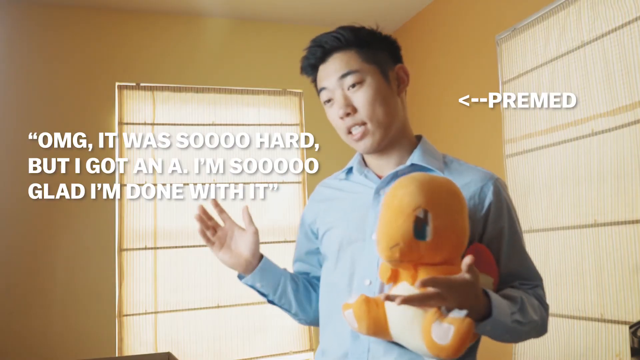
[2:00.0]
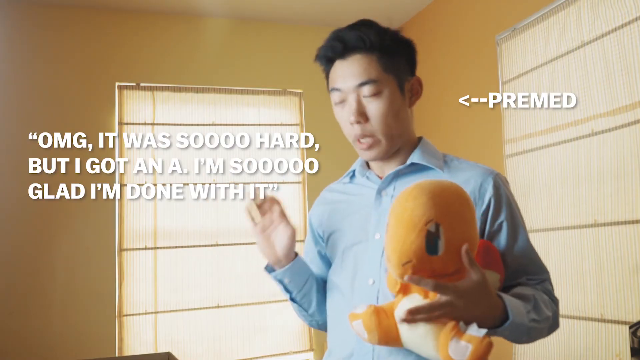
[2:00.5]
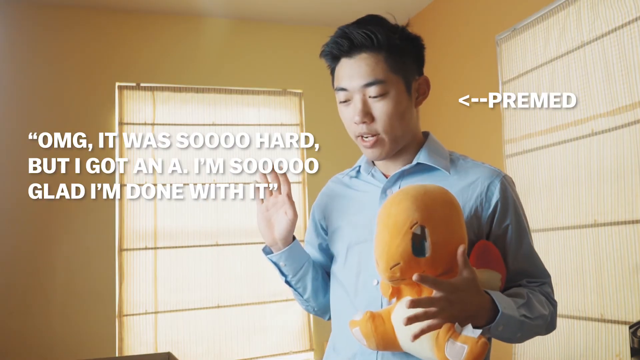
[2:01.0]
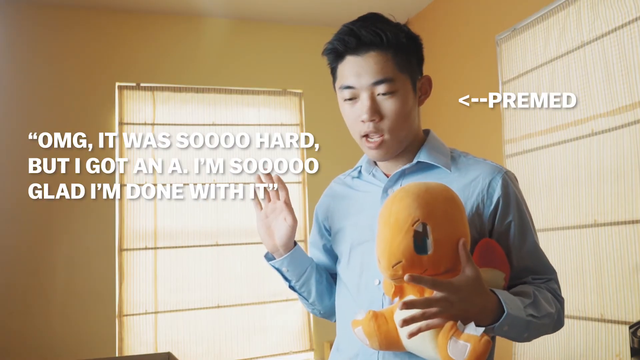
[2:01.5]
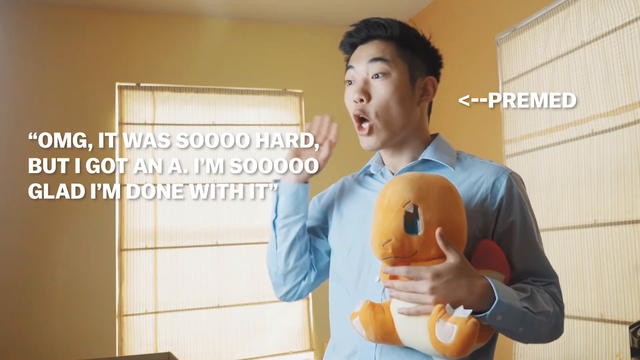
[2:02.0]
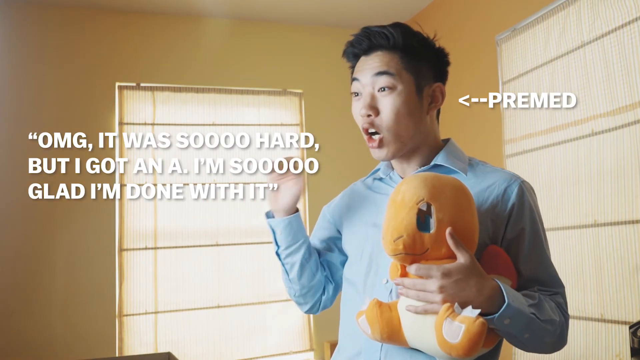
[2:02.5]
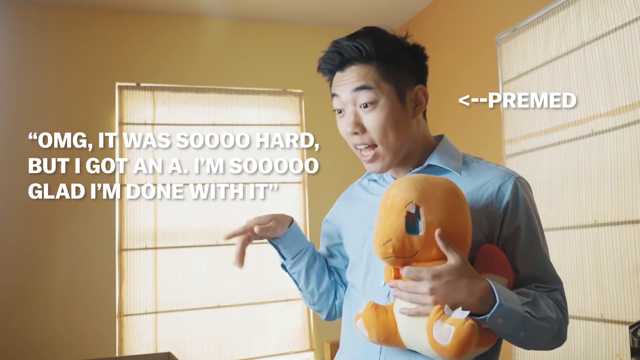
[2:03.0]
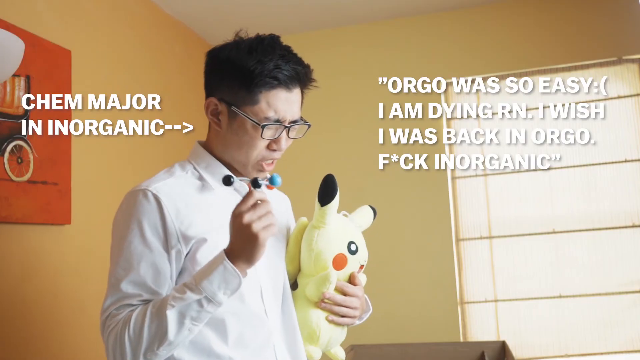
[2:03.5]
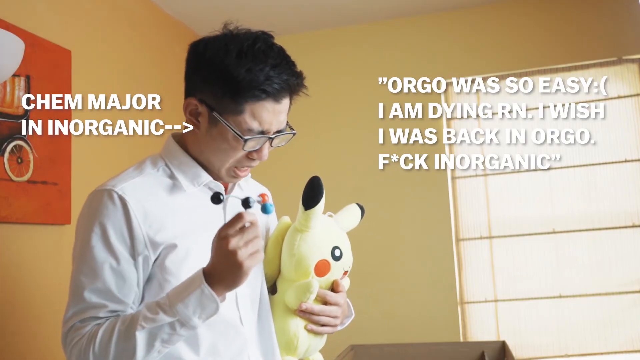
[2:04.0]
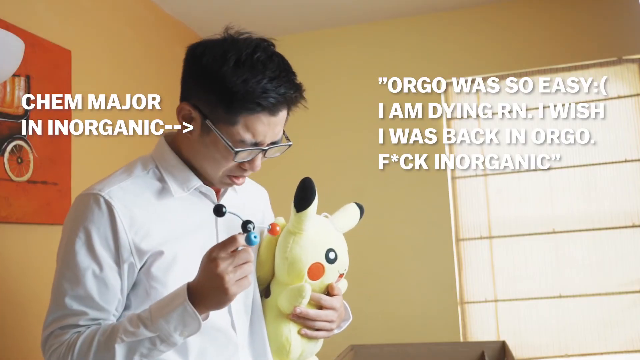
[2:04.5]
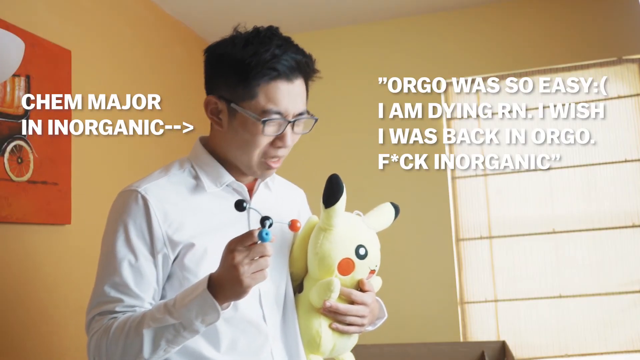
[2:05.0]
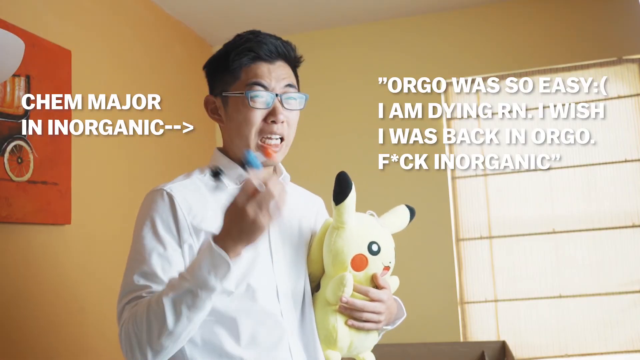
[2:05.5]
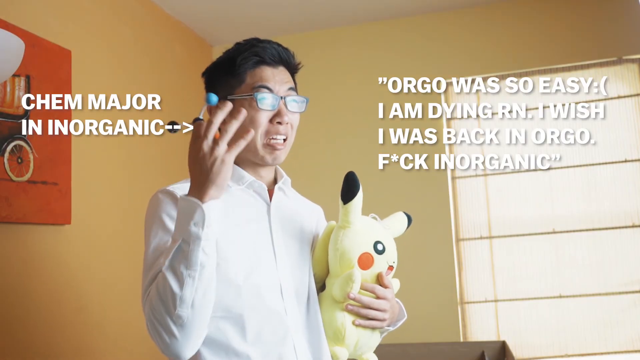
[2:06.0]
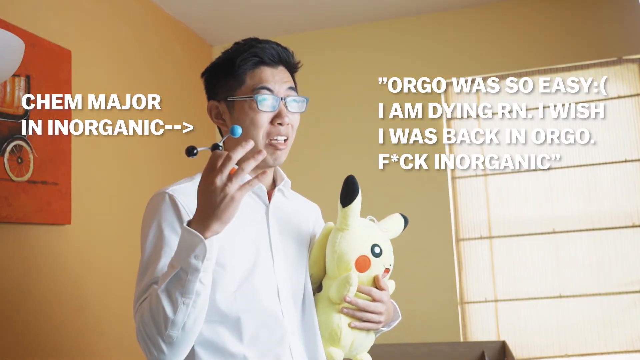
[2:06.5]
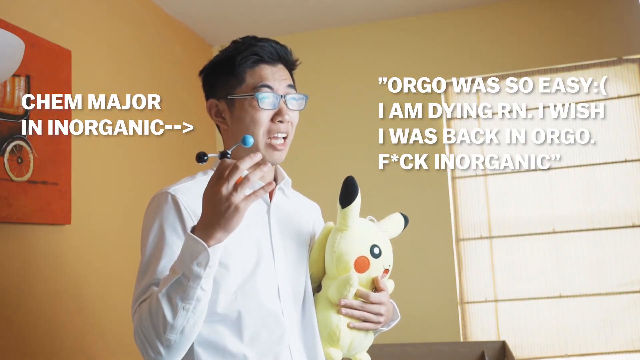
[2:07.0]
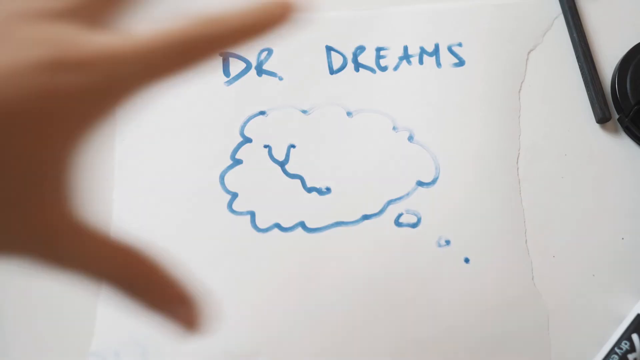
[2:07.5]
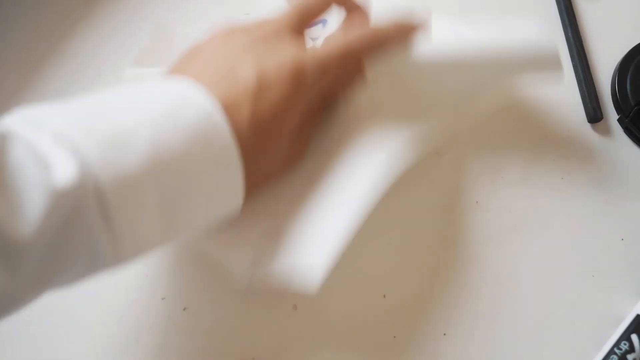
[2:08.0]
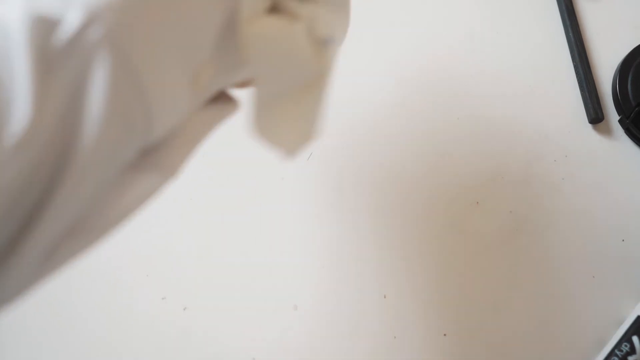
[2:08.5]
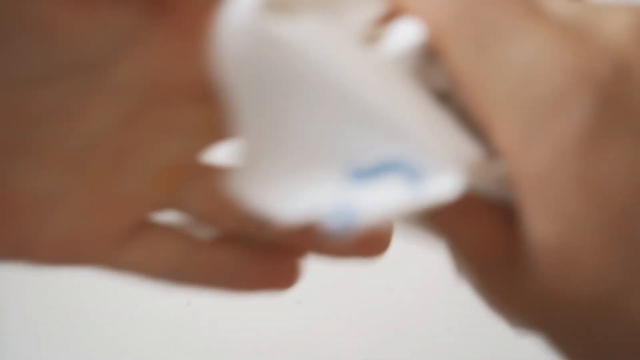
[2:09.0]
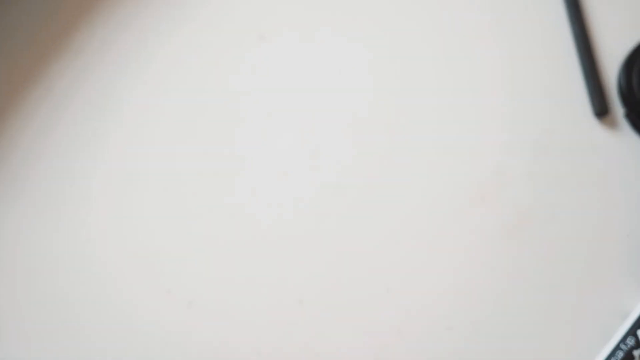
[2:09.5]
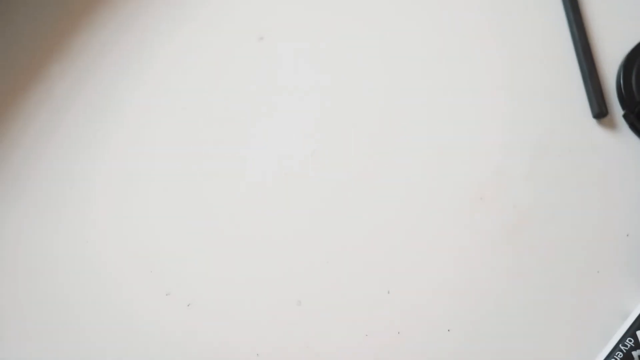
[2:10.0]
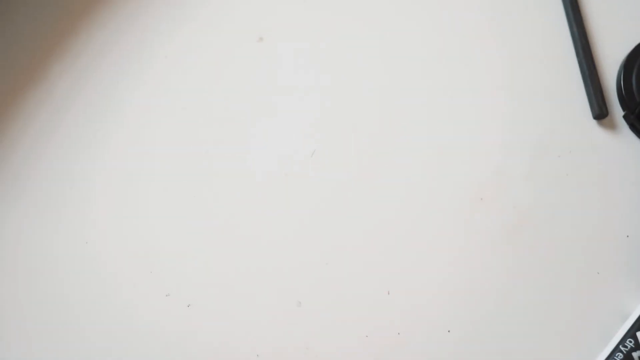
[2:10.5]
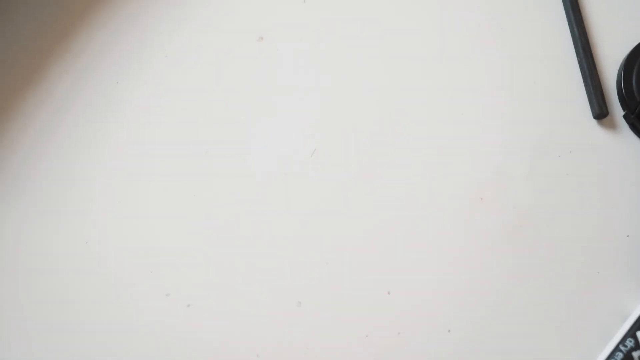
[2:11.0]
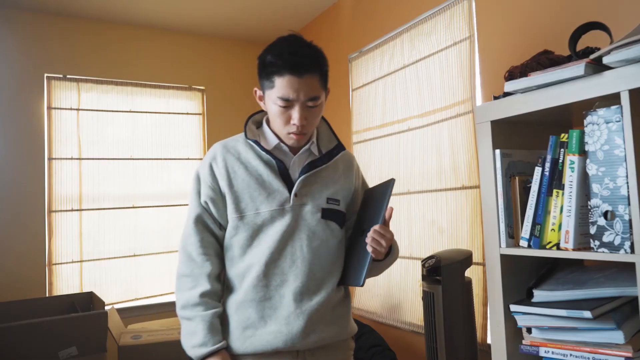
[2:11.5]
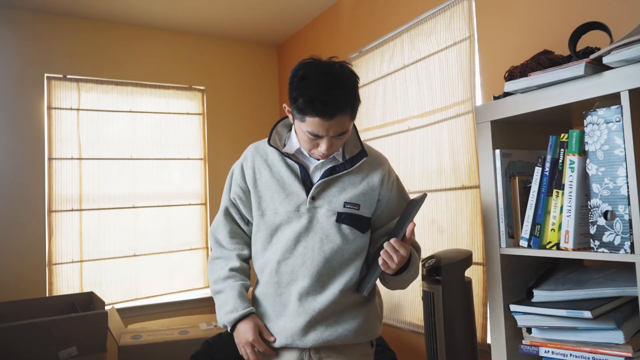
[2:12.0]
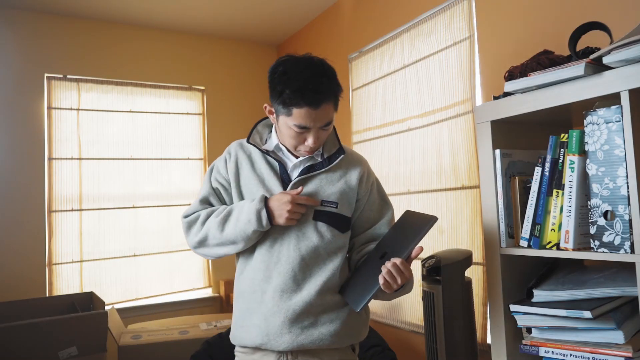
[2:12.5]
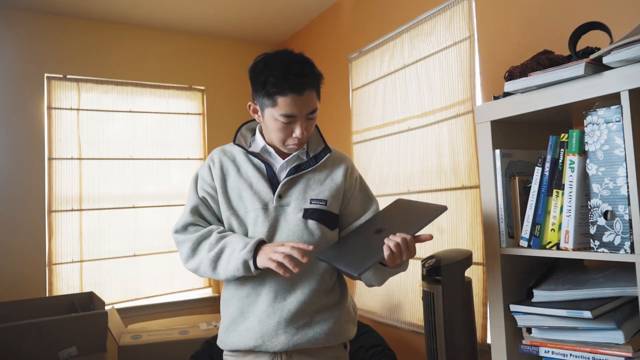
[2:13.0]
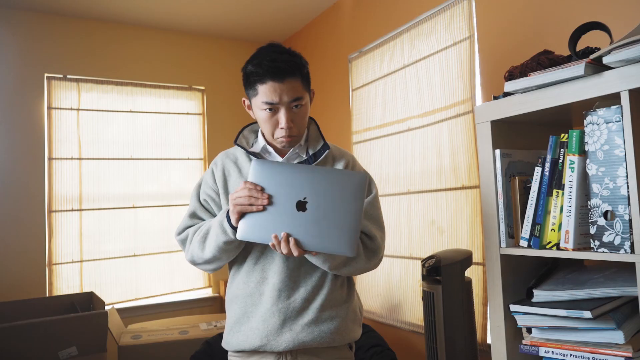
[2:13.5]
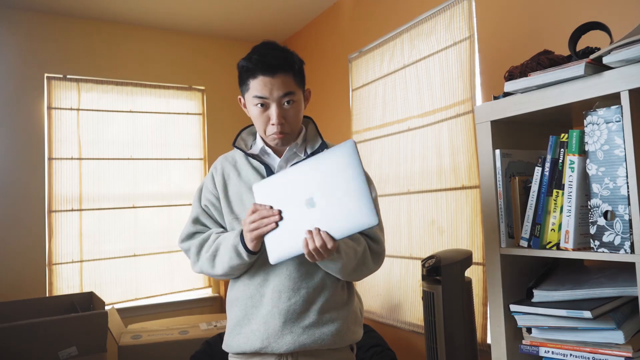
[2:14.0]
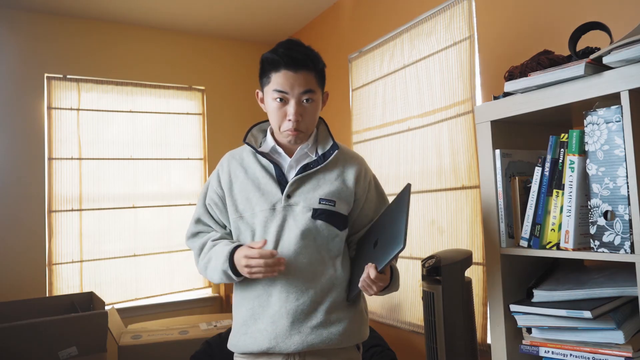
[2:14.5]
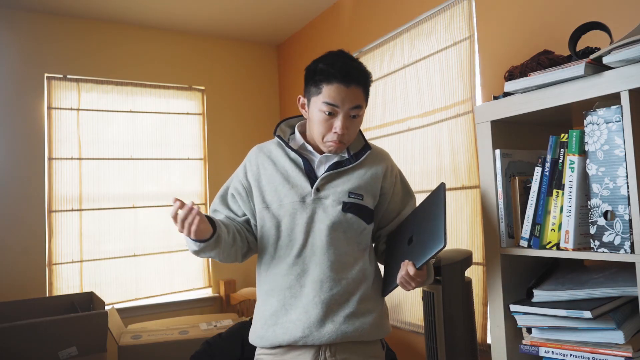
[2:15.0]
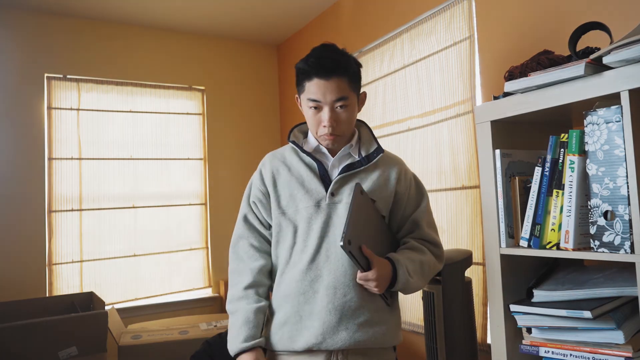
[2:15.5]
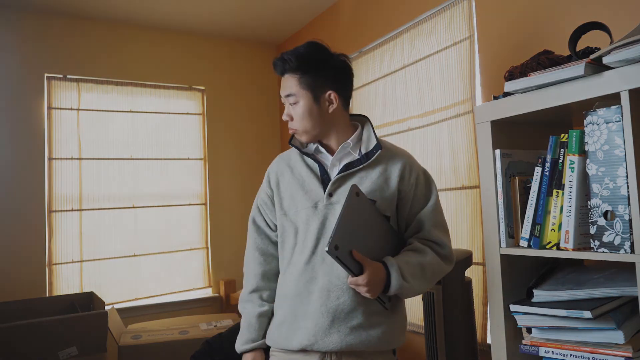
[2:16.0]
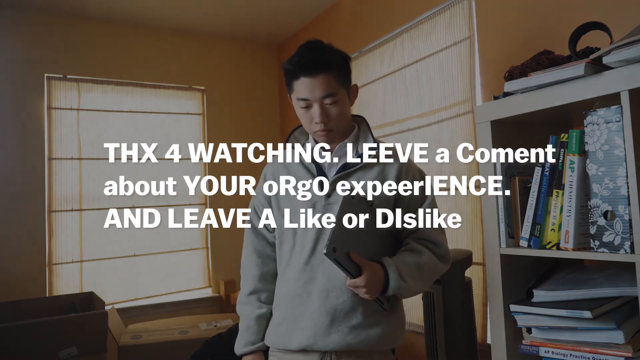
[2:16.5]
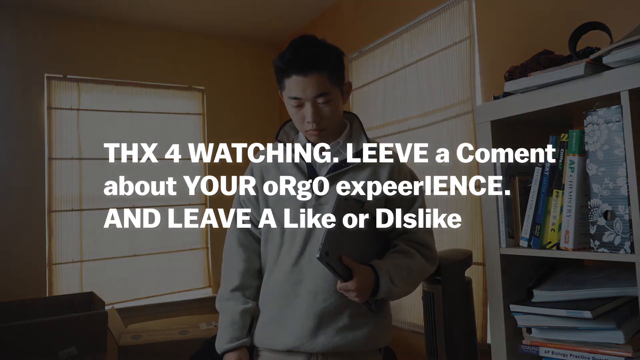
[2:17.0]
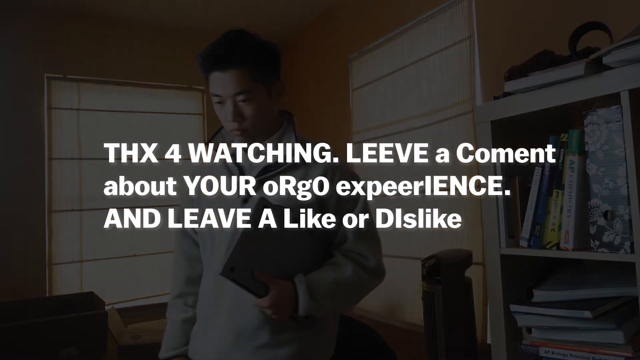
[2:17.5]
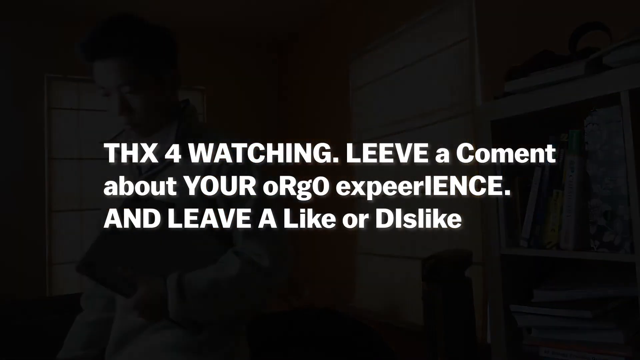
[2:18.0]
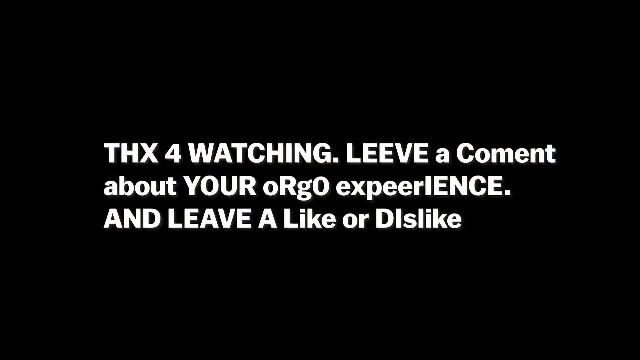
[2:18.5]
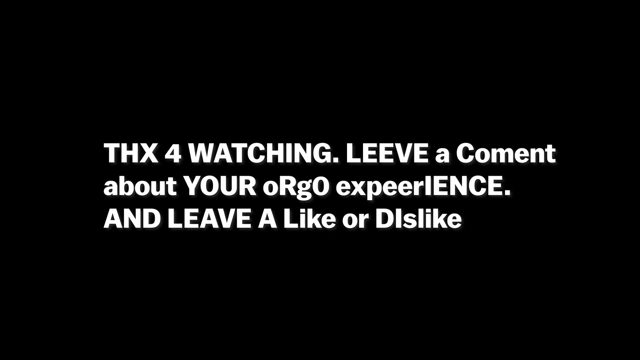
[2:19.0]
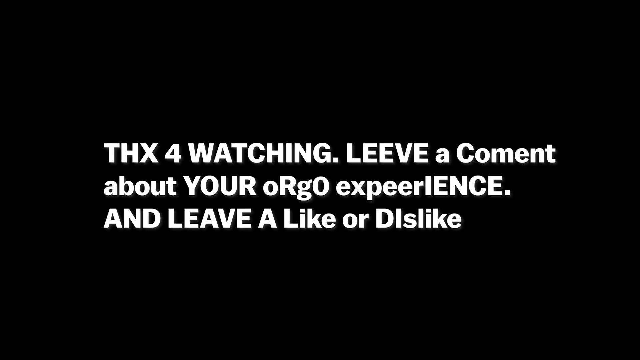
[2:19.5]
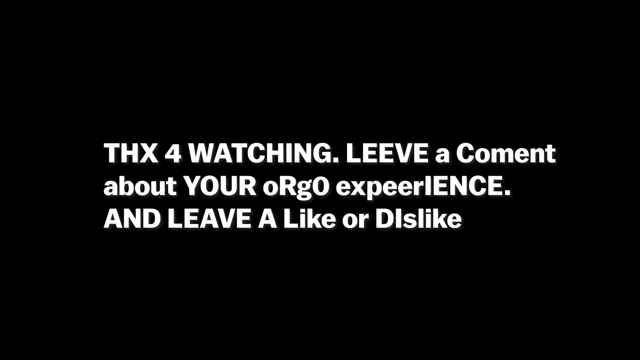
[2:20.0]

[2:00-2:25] A parody of what seems to be a pre-med student appears with the text "oh my god it was so hard but I got an A. I'm so glad I'm done with it." He wears a shirt and holds a Charmander plushie. Another student, a chem major in organic, looks very worried; he says "Orgo was so easy, I am dying right now. I wish I was back in Orgo, fucking Organic." He is extremely stressed, wears a white shirt and has a little Pikachu plushie. A drawing says "Dr. Dreams", but a hand kind of takes the paper, kind of crushes it and takes it away. The student then appears wearing a sweater with a laptop down his arm. White letters thank the viewer for watching and ask them to leave a comment about their Orgo experience and a like or dislike, and the video ends.